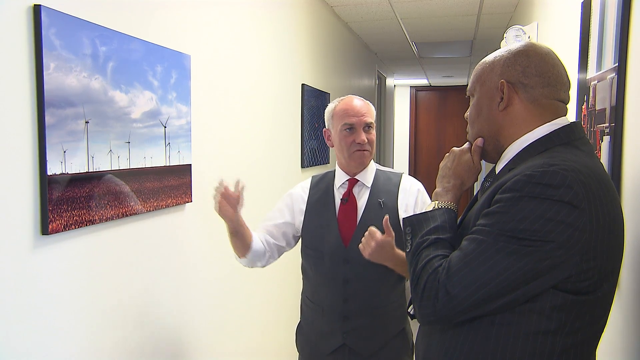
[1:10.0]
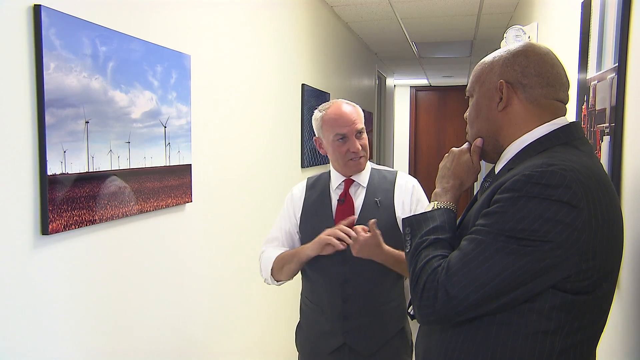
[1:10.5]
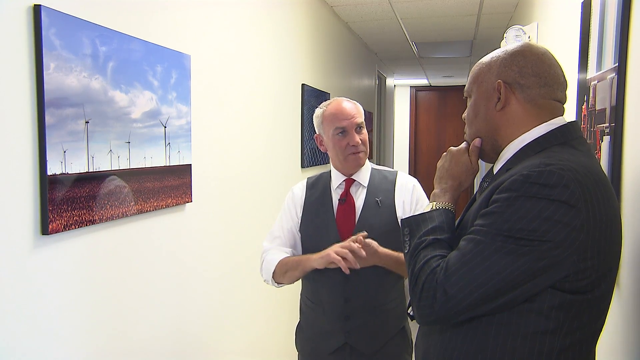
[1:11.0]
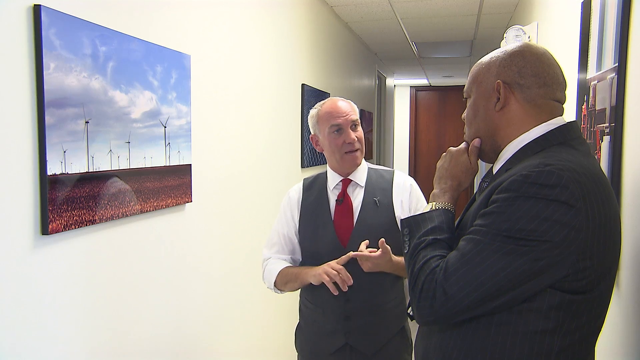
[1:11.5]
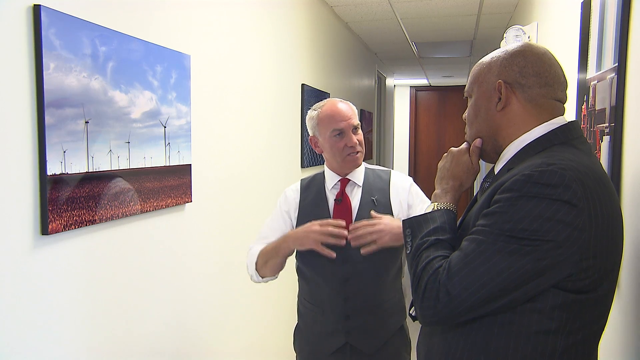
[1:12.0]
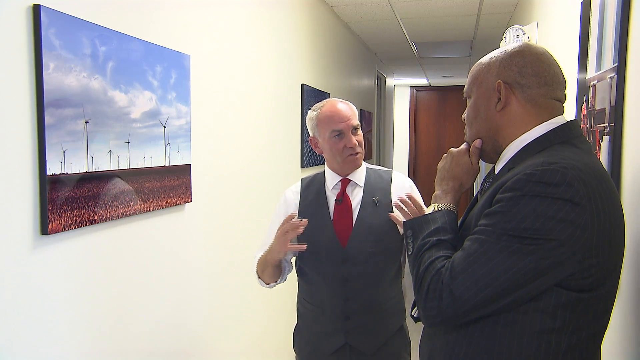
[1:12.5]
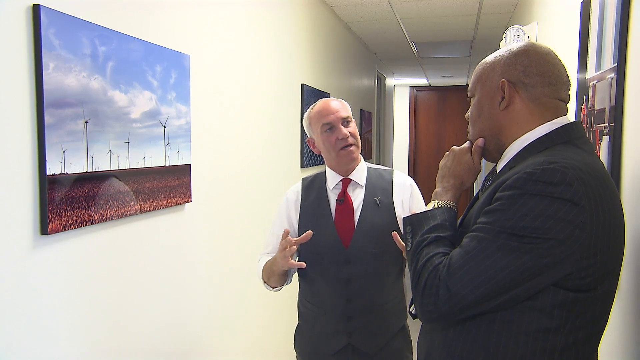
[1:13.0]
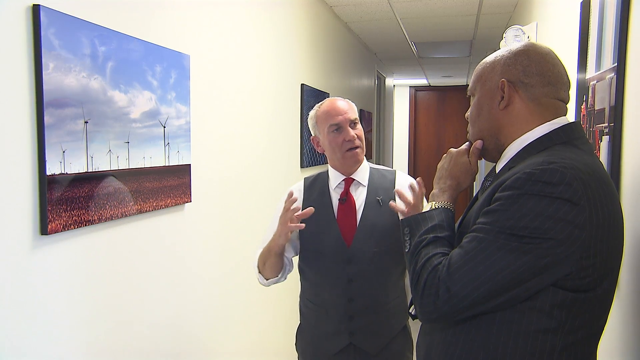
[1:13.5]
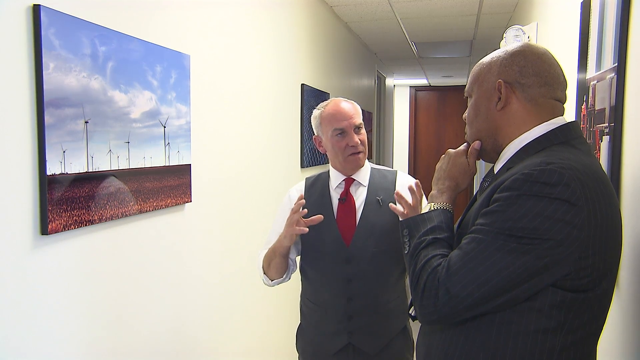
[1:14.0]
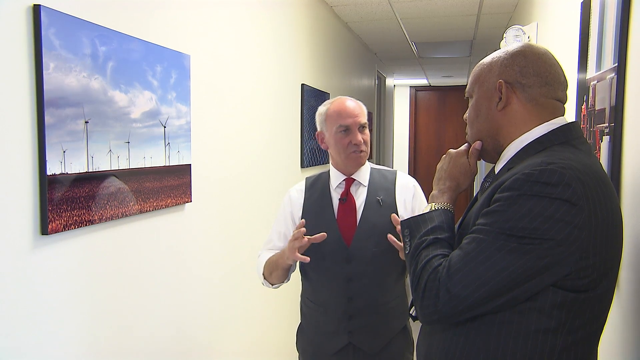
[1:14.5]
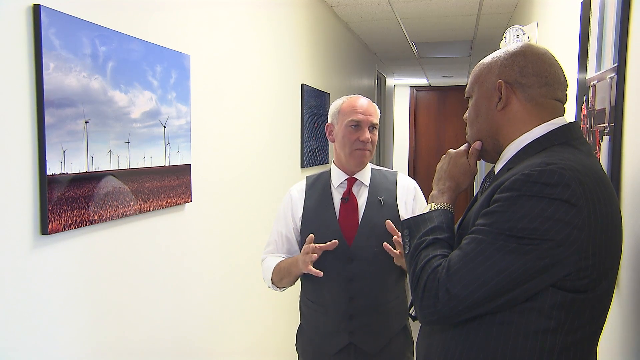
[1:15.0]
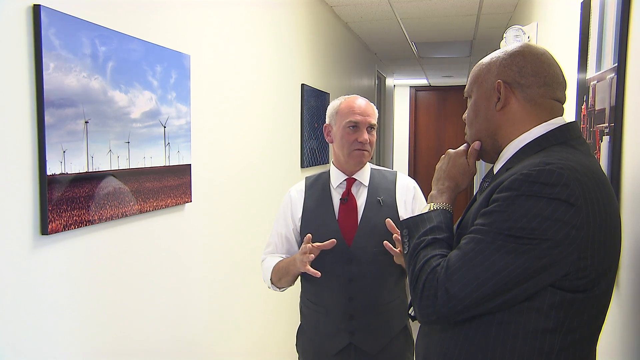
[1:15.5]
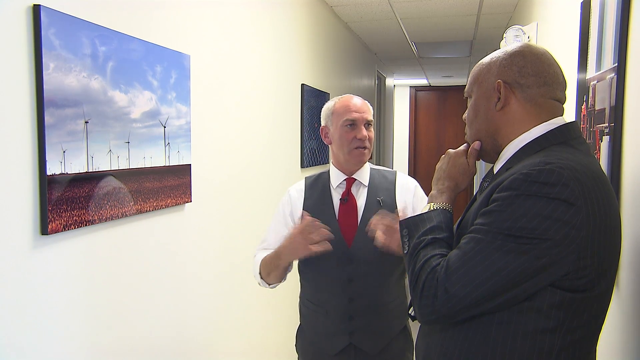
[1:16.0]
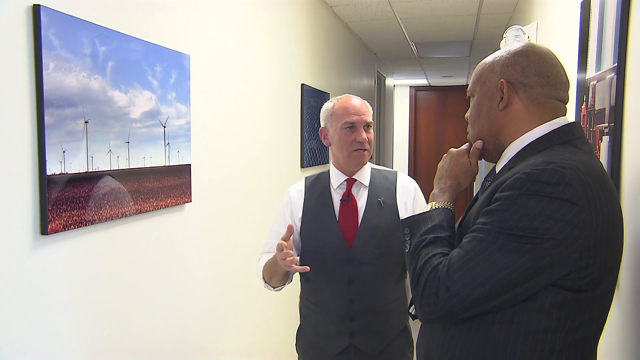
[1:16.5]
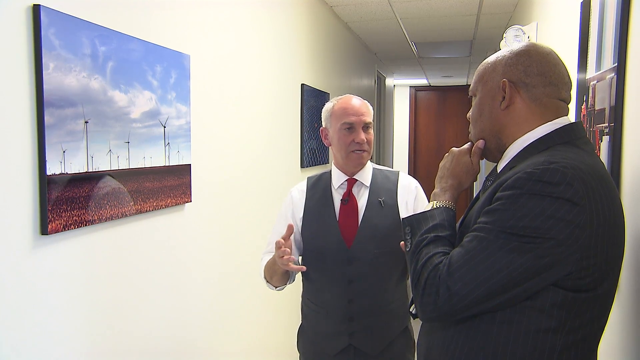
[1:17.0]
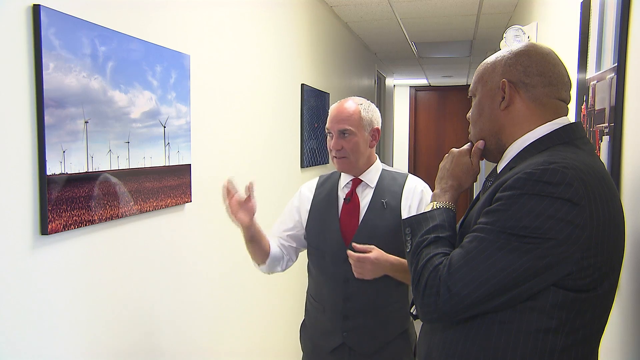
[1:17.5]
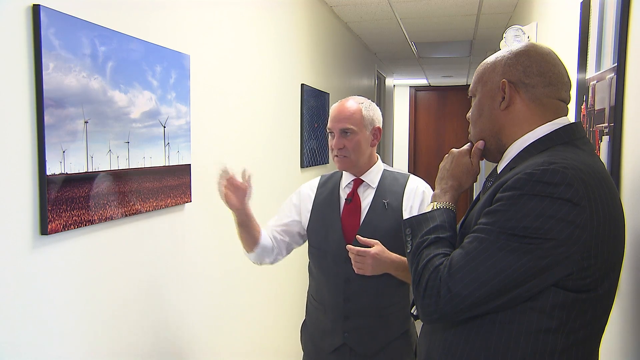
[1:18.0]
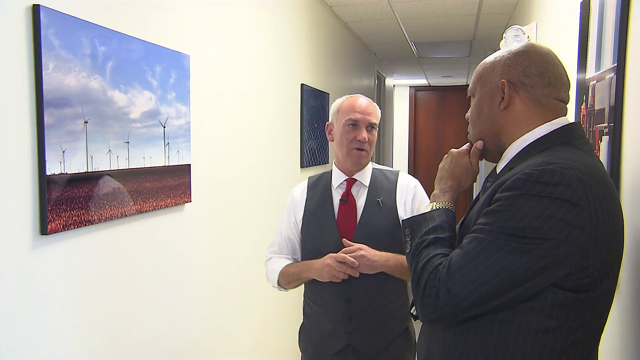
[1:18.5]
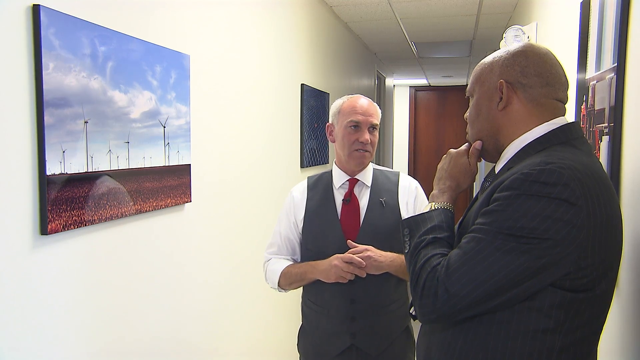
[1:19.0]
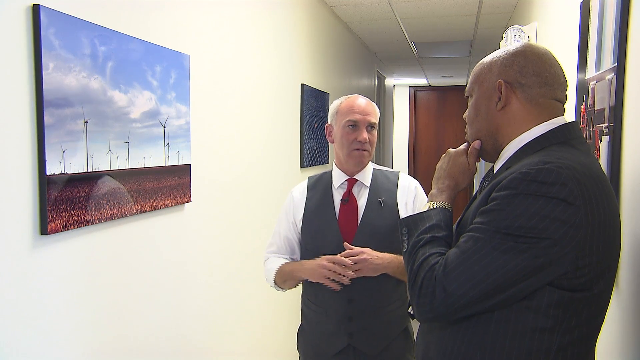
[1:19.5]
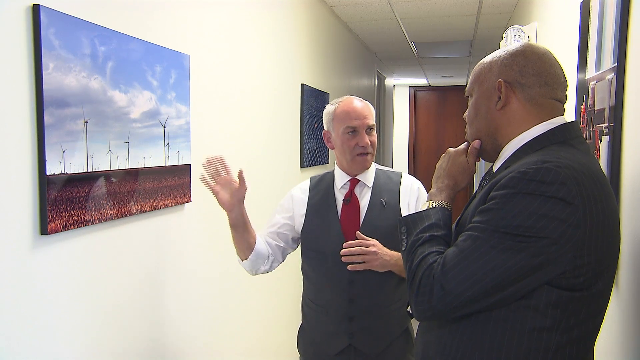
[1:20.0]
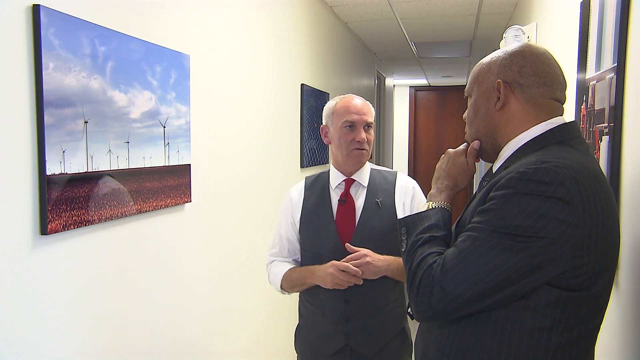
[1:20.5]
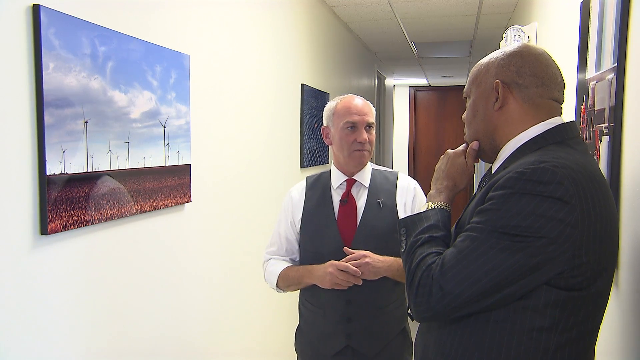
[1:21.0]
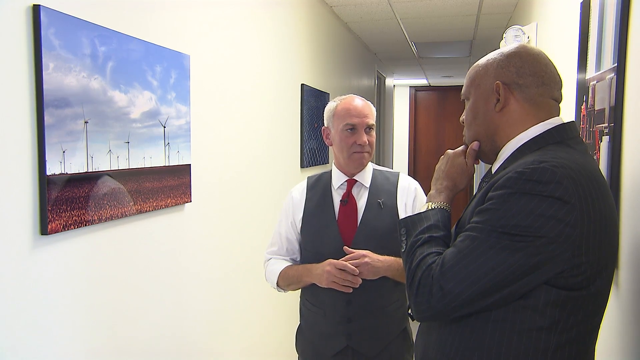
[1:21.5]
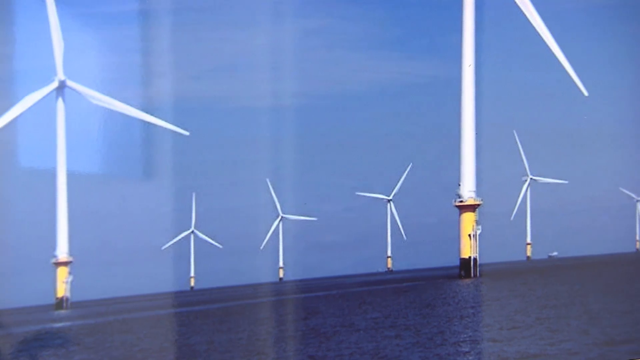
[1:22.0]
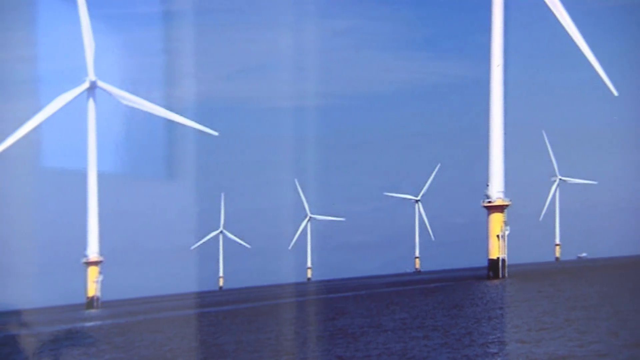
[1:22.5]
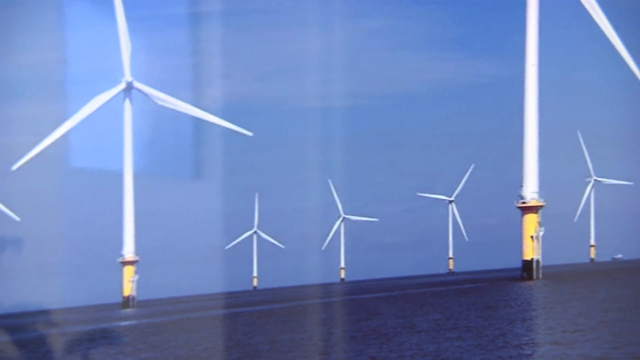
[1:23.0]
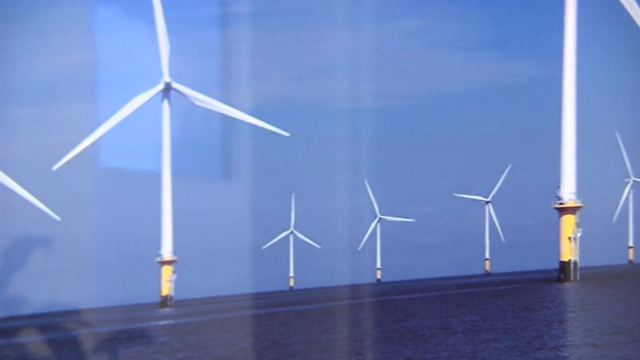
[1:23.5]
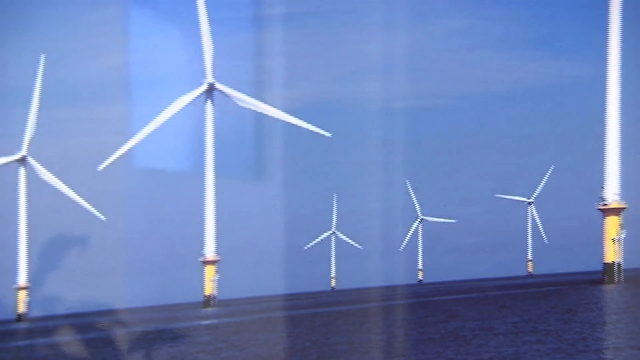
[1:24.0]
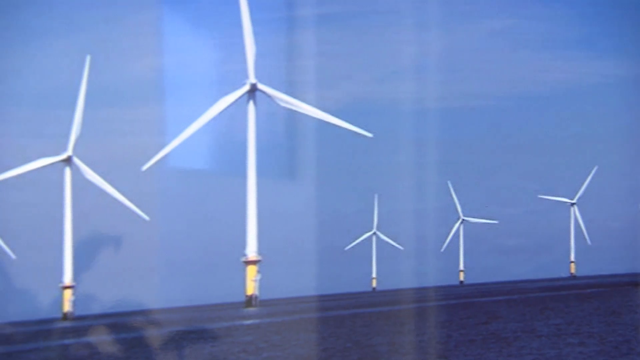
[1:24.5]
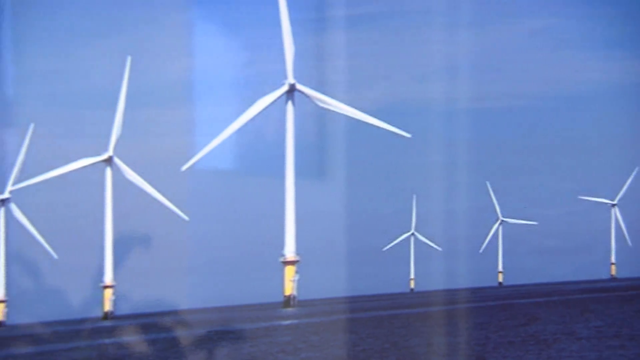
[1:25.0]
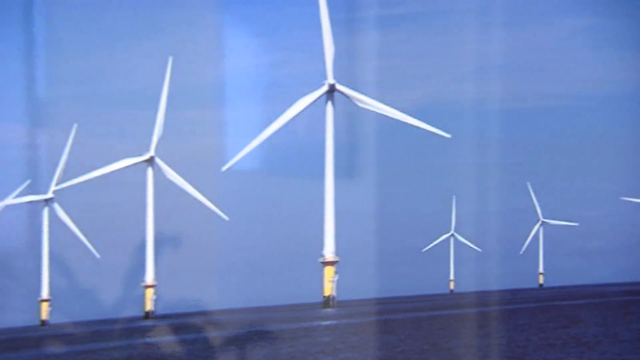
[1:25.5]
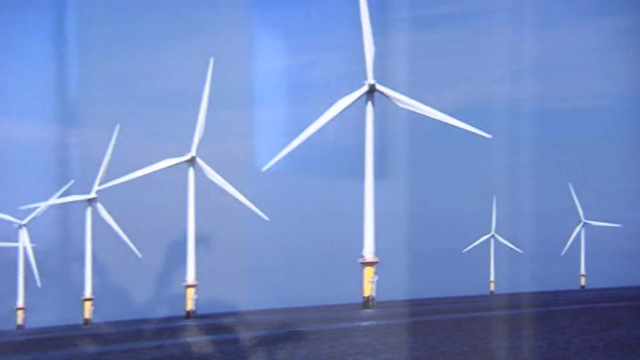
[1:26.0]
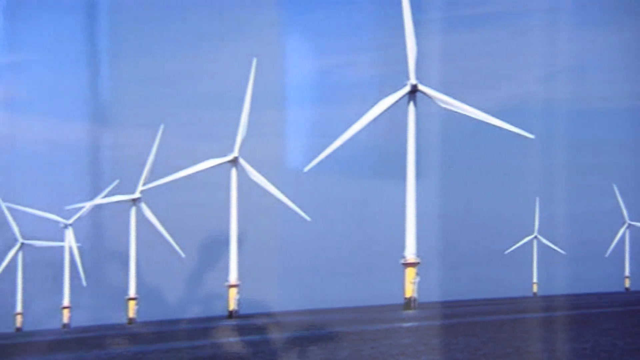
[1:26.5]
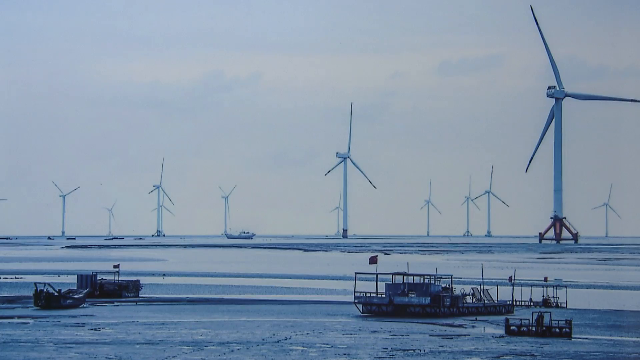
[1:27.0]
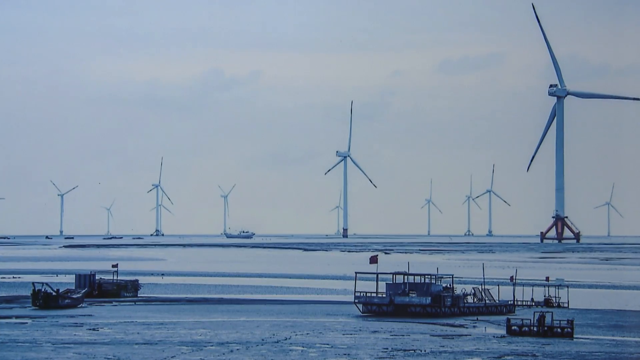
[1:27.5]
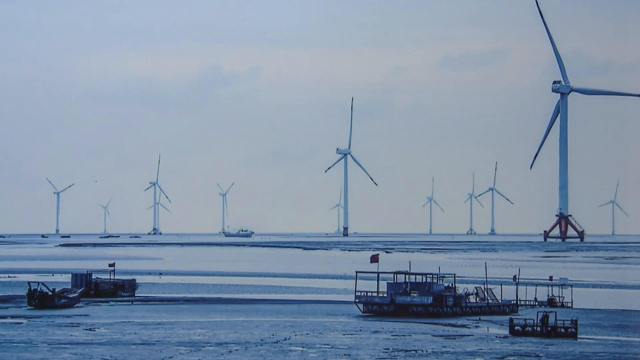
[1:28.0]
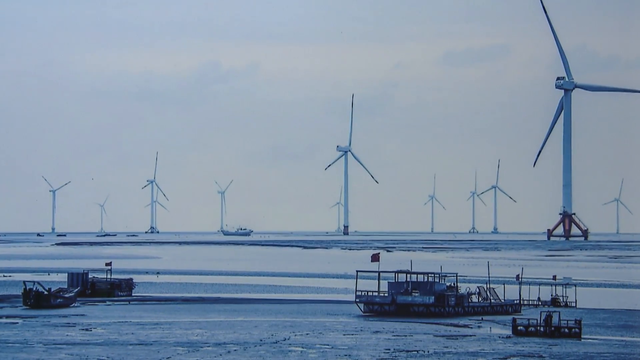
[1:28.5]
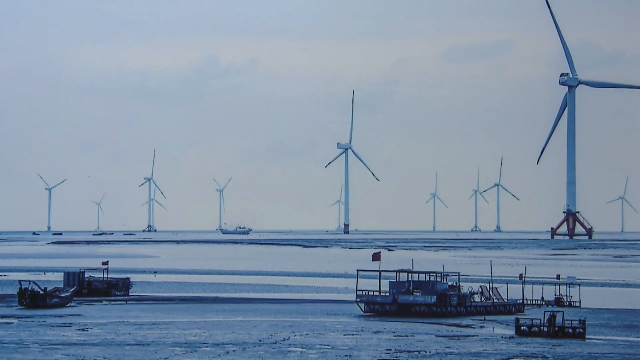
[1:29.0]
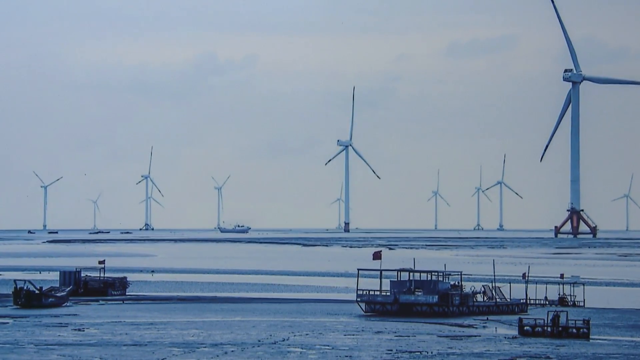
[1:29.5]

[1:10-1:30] Two men stand in a white-walled corridor with a brown door at the end and a kind of tiled roof above. The grey-haired man in a grey waistcoat, white shirt and red tie waves his hands as he speaks to the other man, who has a shaved head and is holding his chin up with his hand, listening. The grey-haired man uses his hands to count out one and then two points while gesturing and pointing at a framed picture of wind turbines set against a bright blue sky. The camera then appears to zoom in on part of the picture, showing the turbines in detail: they have a yellow base and large white blades. Another scene follows of what look like similar turbines, but in a different picture, with a duller sky, the turbines seen from a slightly different angle, and a different base.